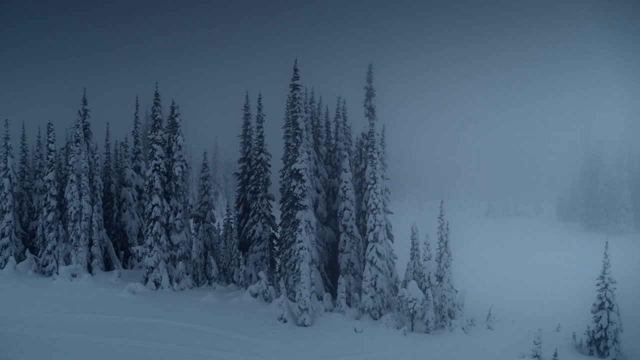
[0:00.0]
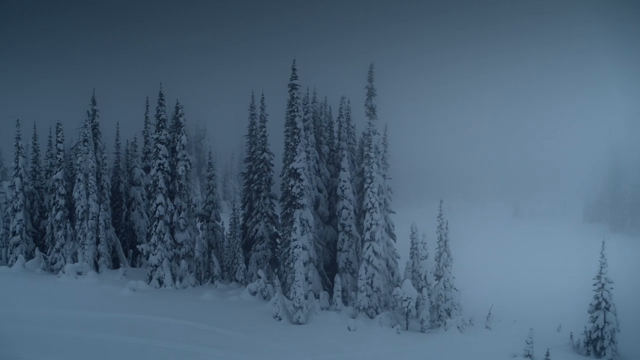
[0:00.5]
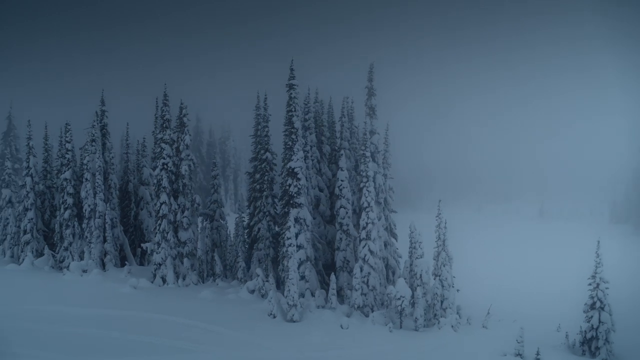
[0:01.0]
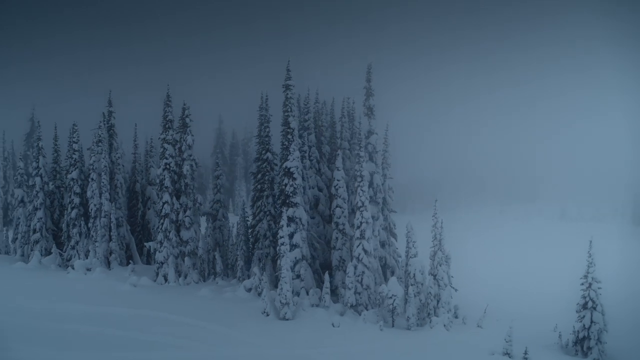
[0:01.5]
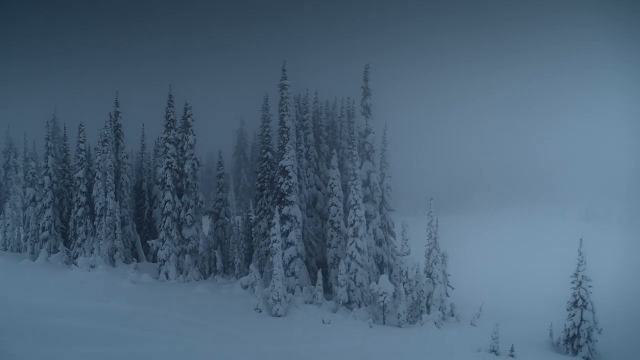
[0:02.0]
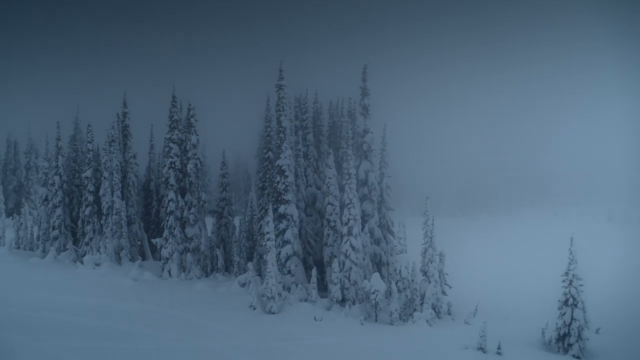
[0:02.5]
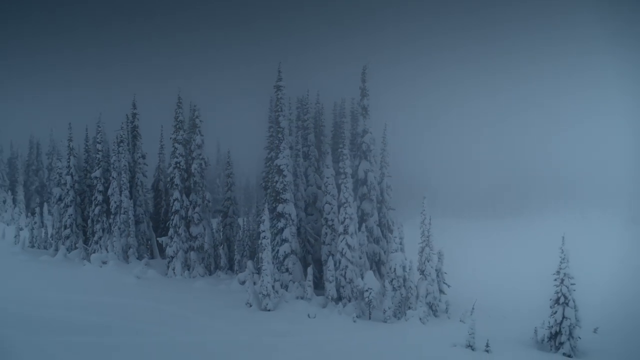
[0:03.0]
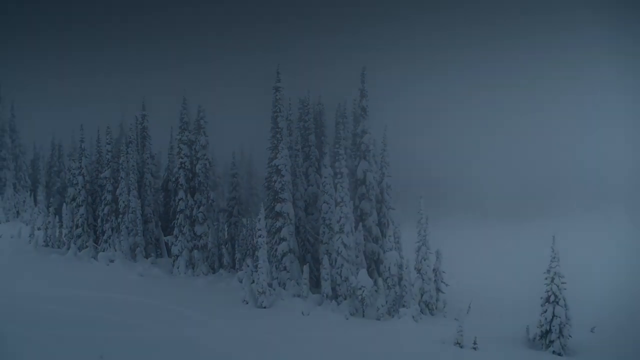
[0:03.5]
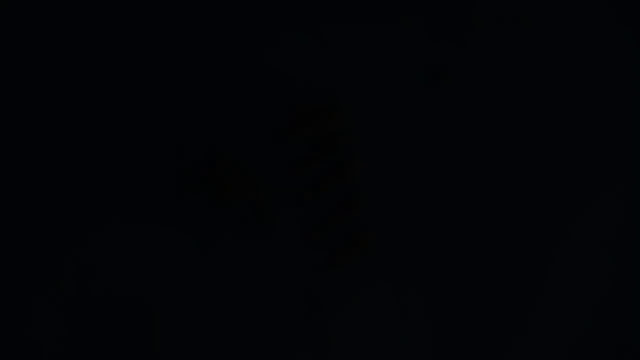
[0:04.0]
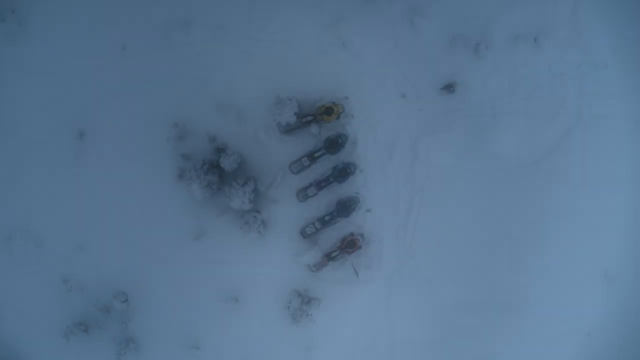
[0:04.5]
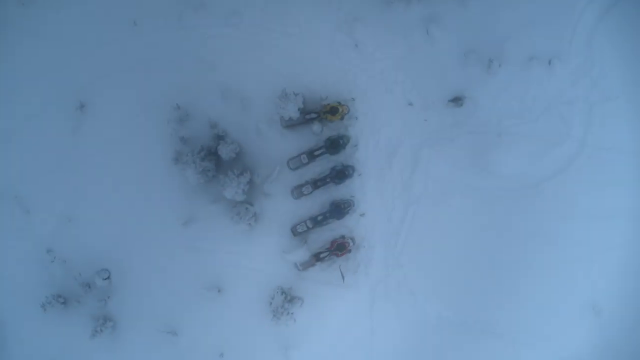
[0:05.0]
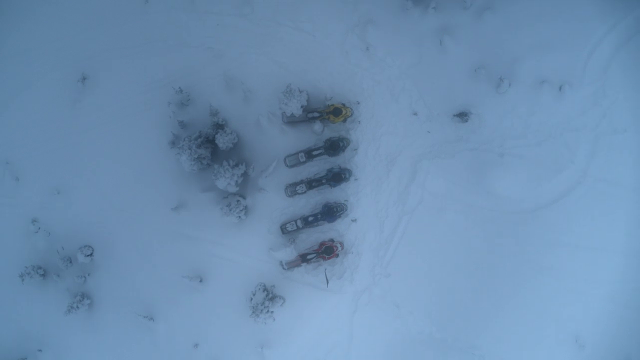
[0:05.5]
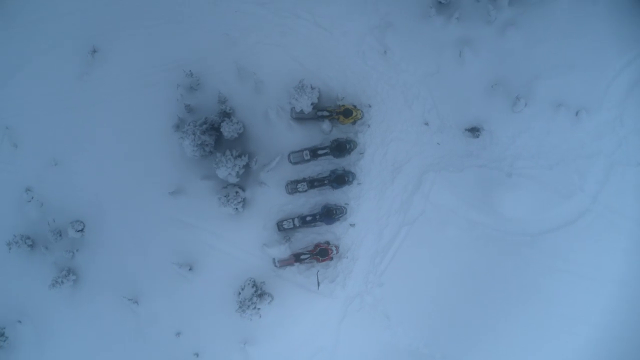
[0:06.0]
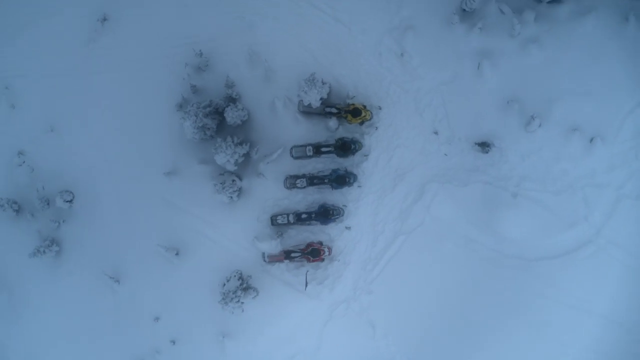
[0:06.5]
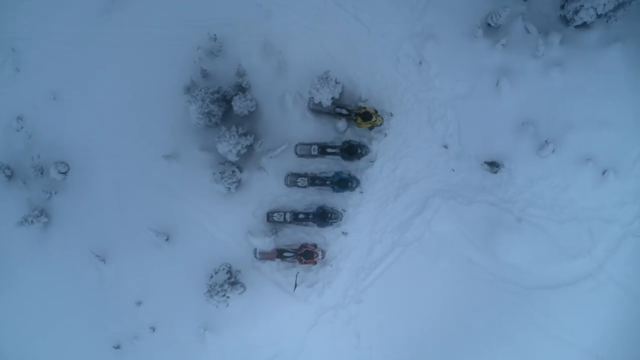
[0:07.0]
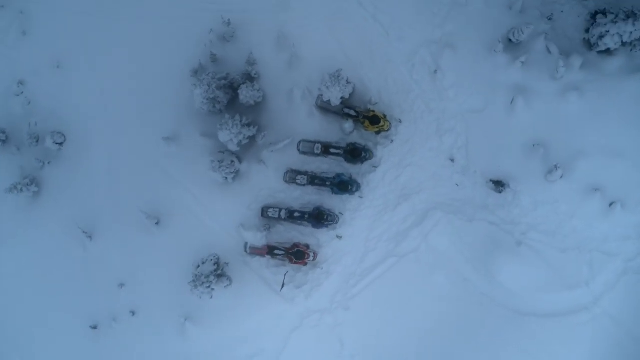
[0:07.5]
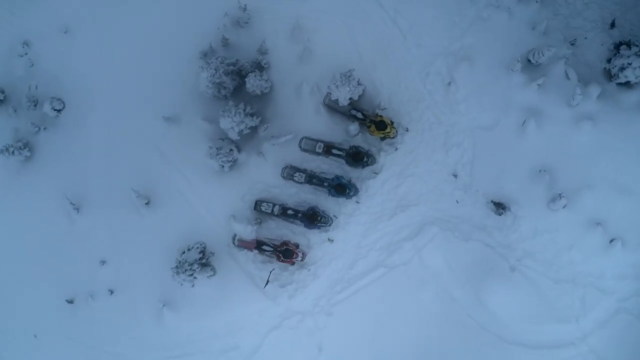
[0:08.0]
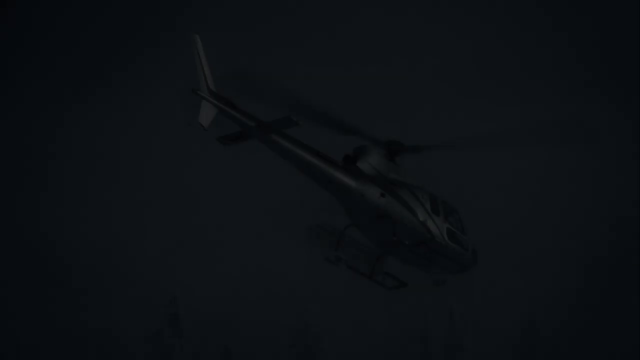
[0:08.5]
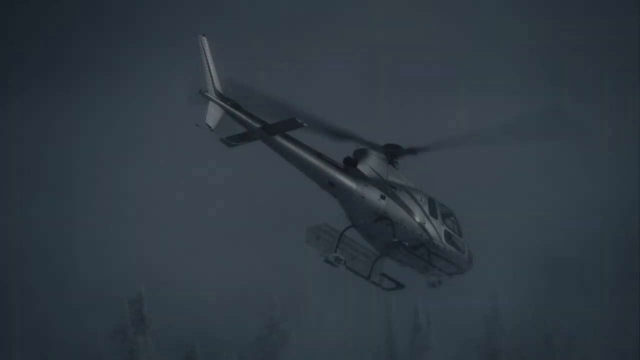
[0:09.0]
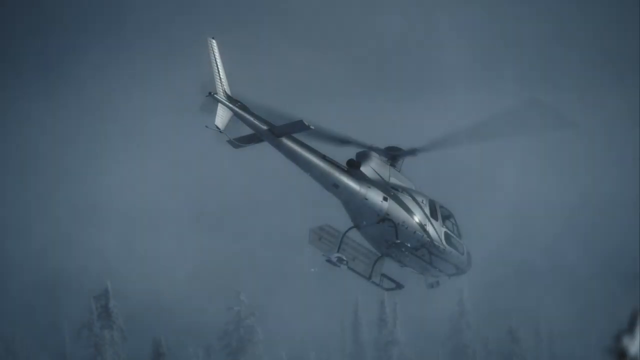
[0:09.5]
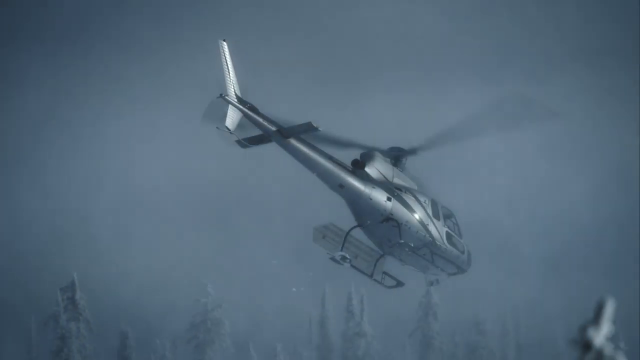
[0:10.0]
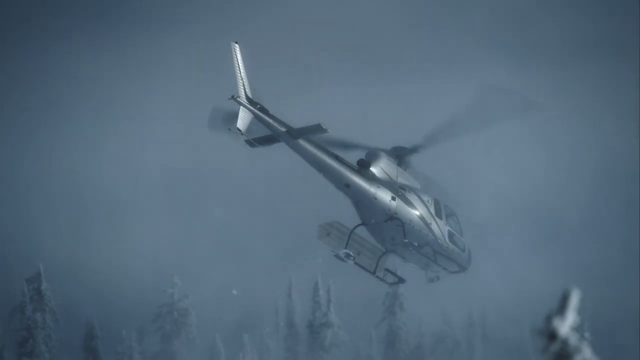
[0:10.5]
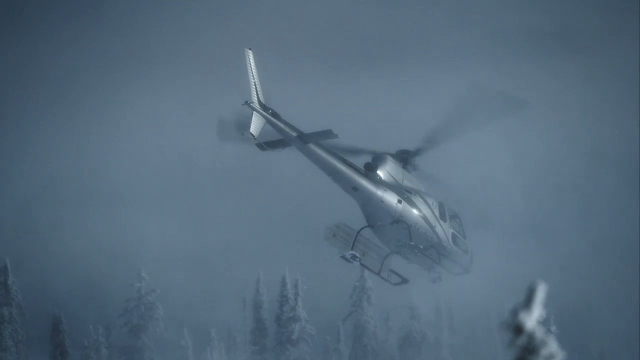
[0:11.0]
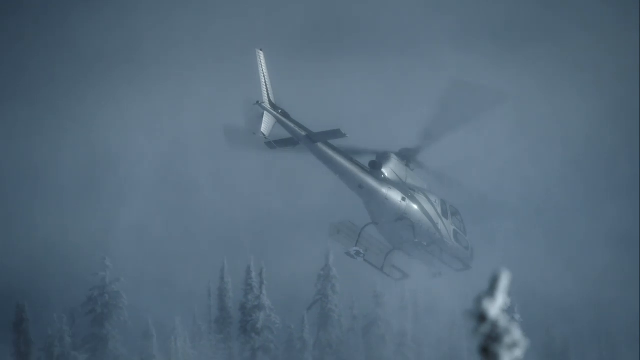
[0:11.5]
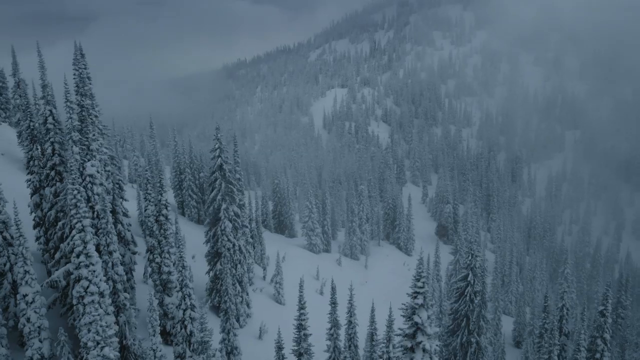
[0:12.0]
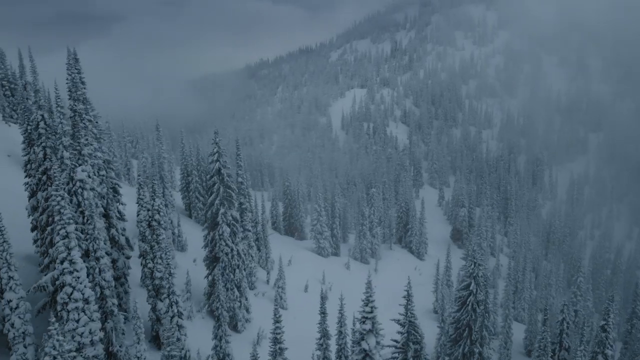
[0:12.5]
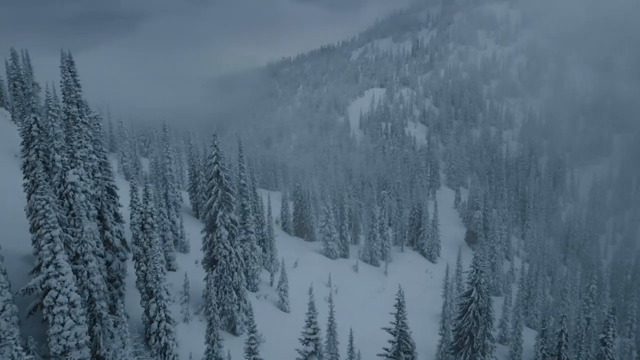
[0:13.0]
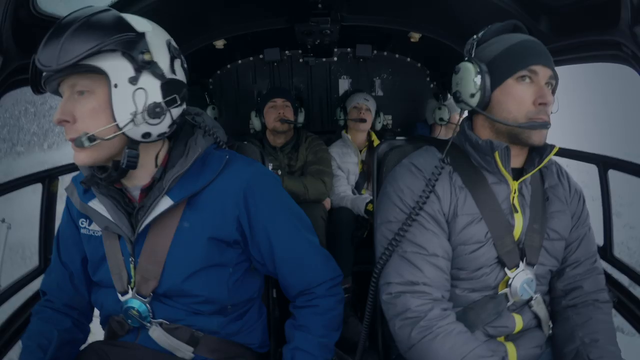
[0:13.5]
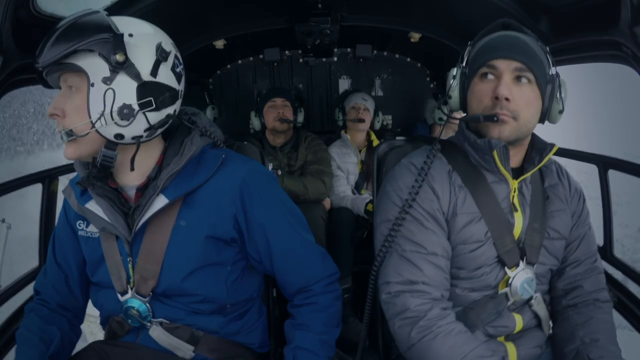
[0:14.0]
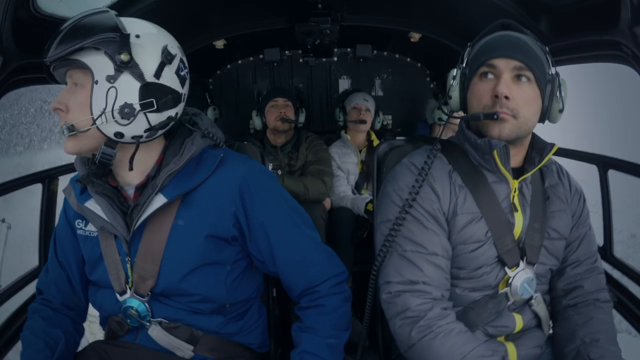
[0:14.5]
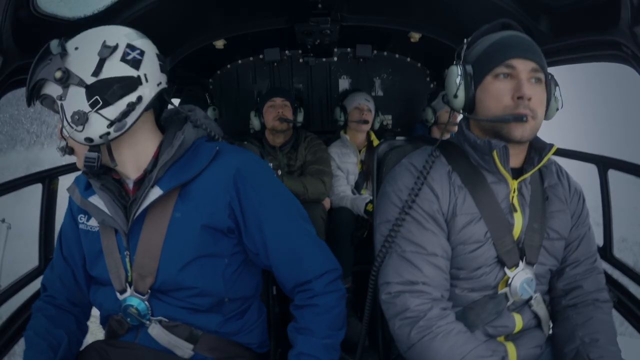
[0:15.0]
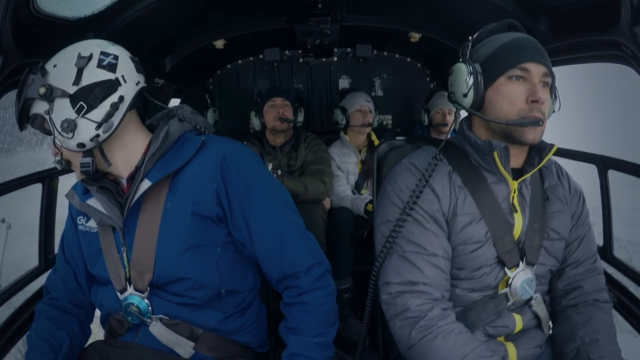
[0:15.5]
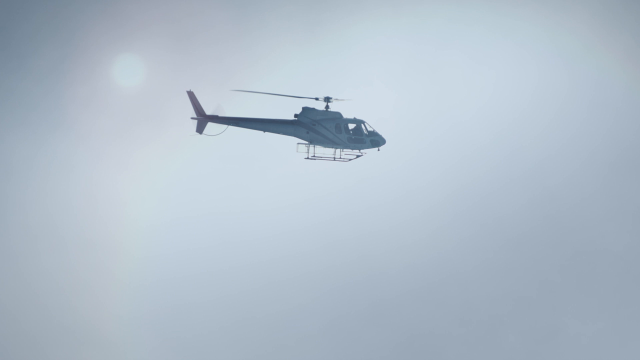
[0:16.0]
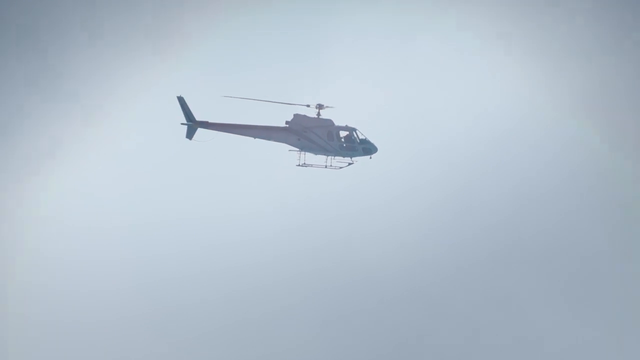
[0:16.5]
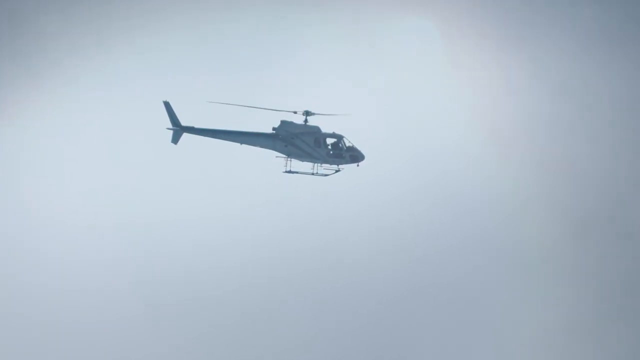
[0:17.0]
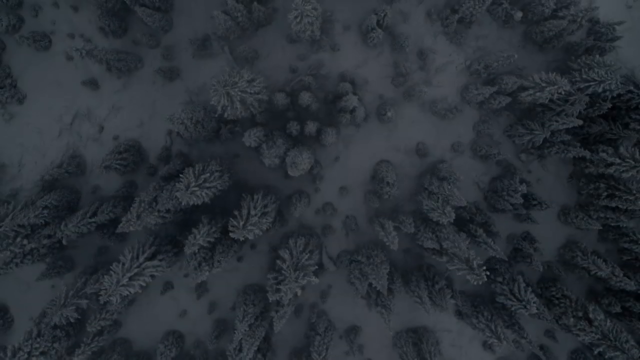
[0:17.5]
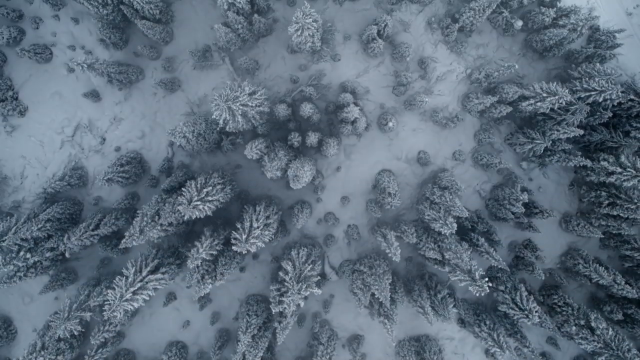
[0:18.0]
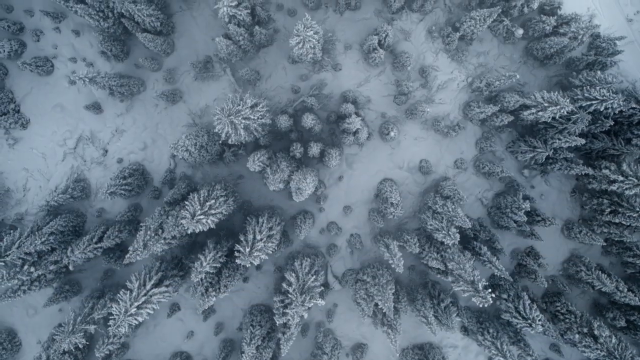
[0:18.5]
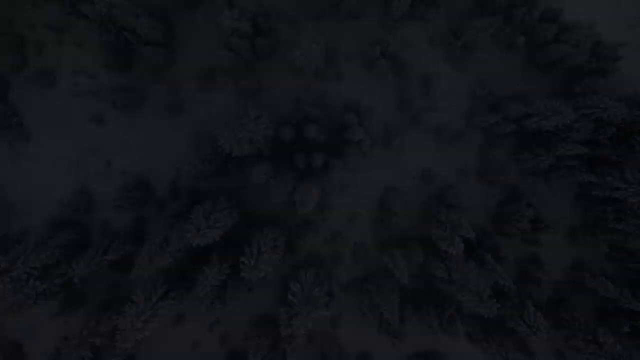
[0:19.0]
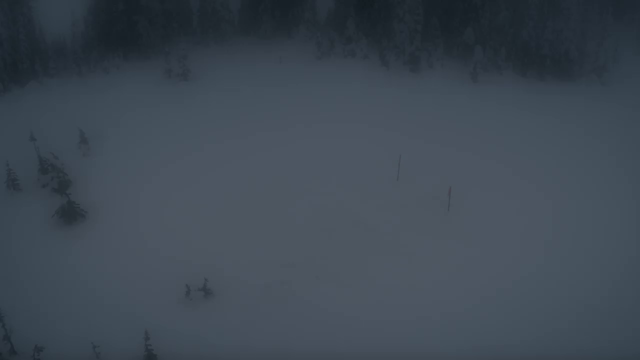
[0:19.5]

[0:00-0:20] In a snowy area there are a number of sleighs and skis, and about four or five people ride around in a helicopter. Several bikes are on a snow-covered hill, apparently as many bikes as there are people in the helicopter. The bikes come in different colours: yellow, blue, red and black. Everyone wears a helmet, and the group seems about to go out and slide down the snowy hill on the bikes. The people look like professionals who do this often.